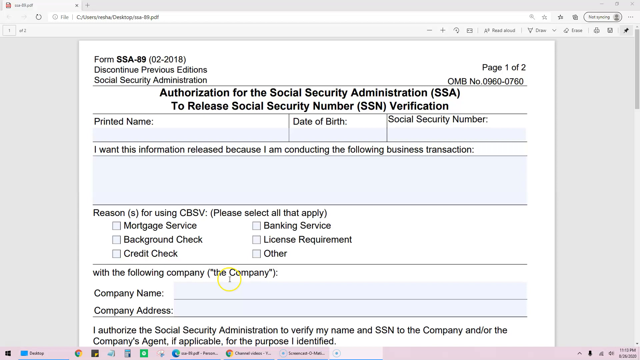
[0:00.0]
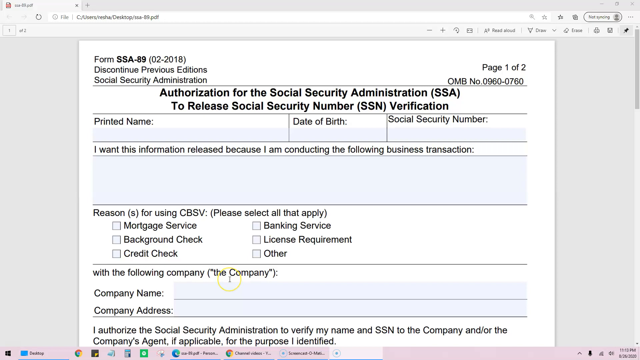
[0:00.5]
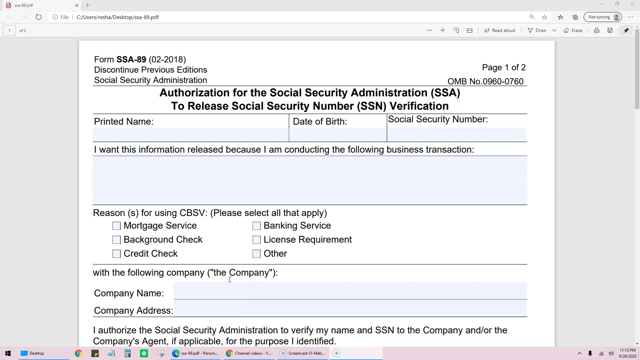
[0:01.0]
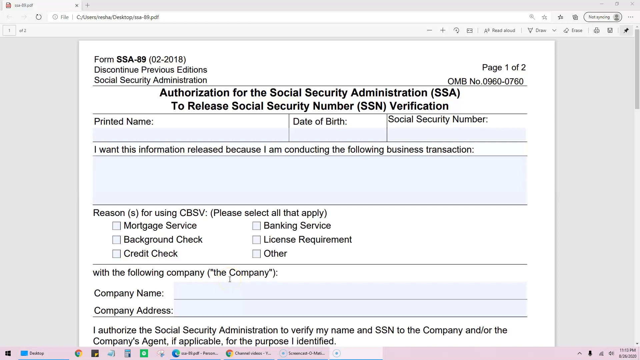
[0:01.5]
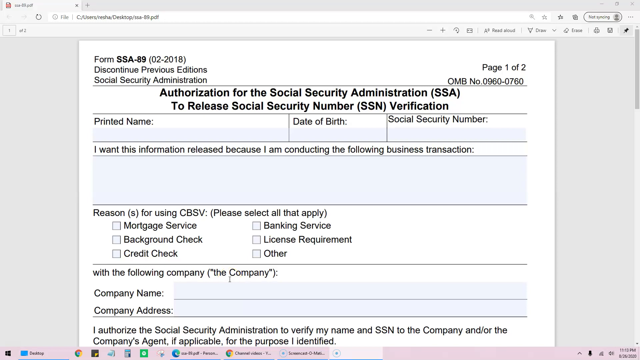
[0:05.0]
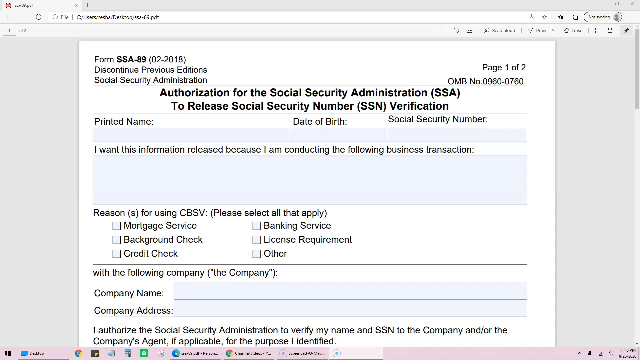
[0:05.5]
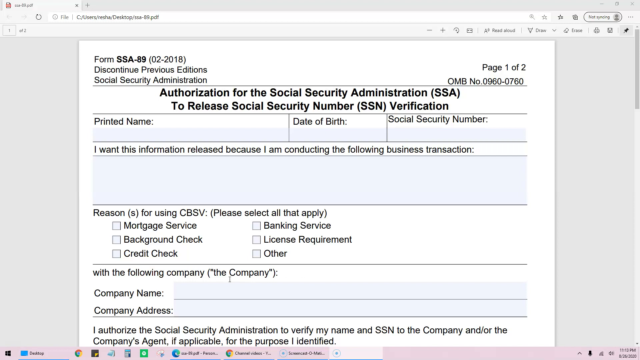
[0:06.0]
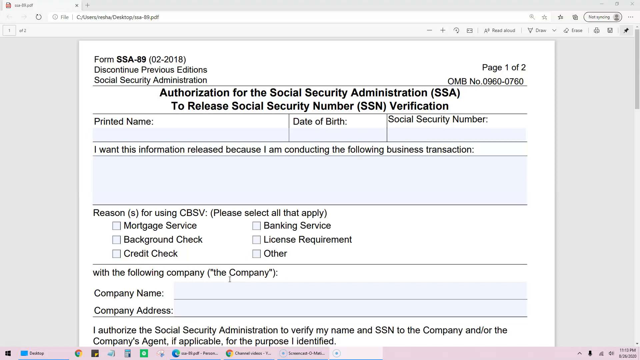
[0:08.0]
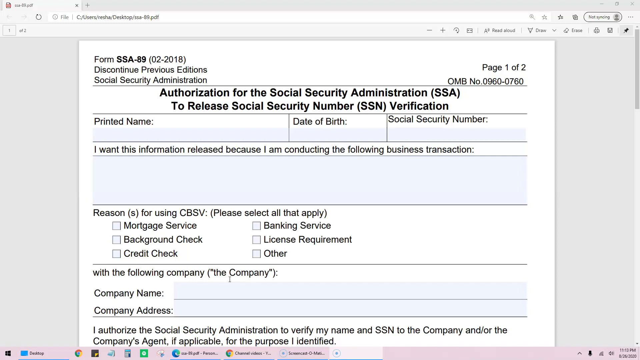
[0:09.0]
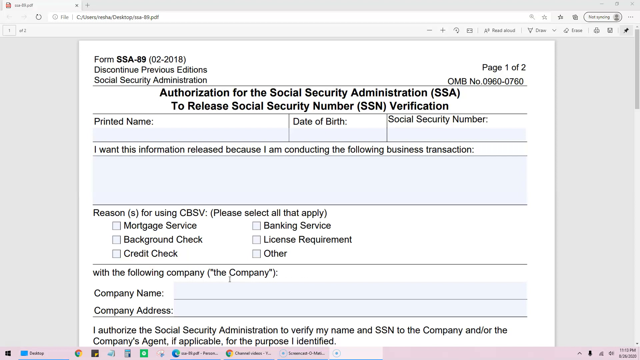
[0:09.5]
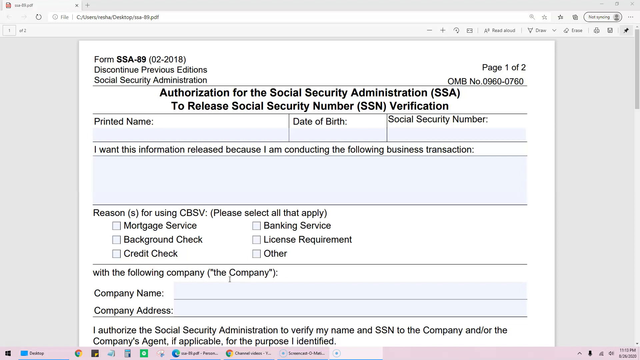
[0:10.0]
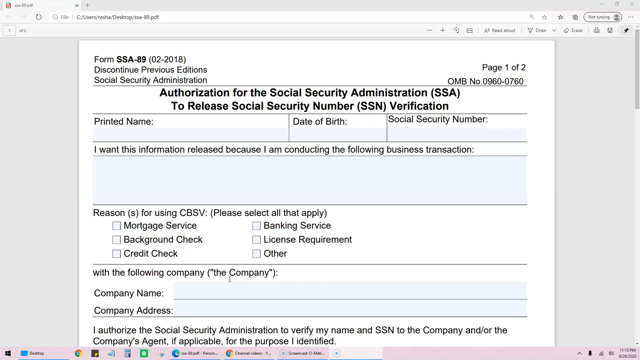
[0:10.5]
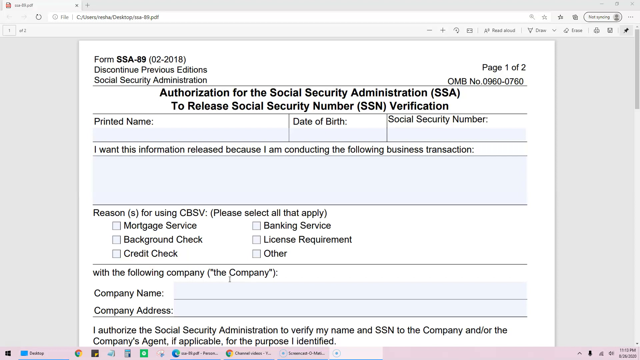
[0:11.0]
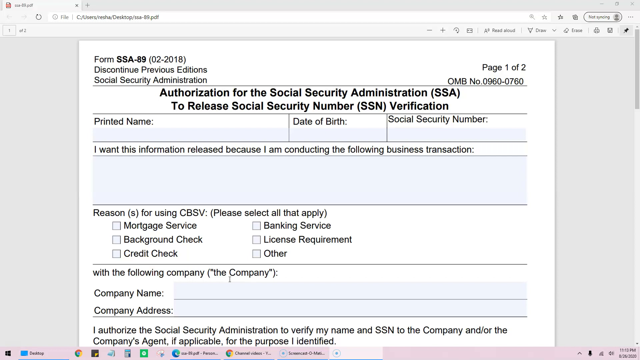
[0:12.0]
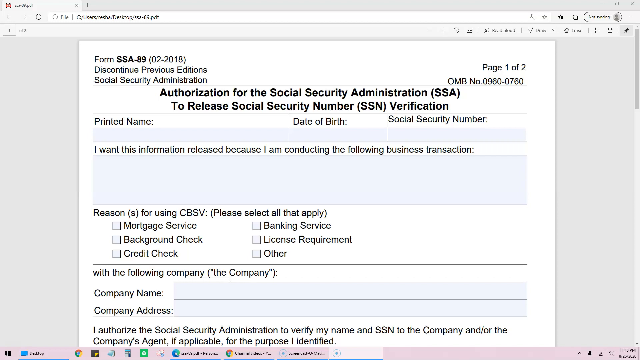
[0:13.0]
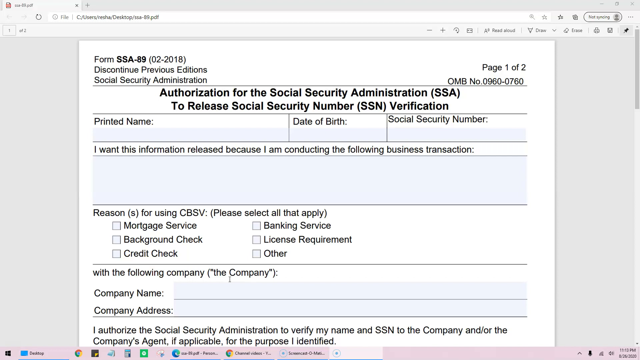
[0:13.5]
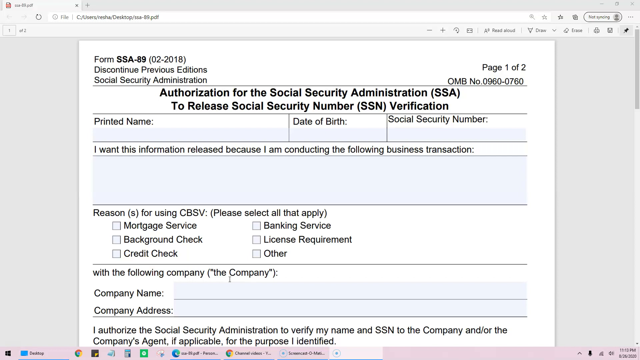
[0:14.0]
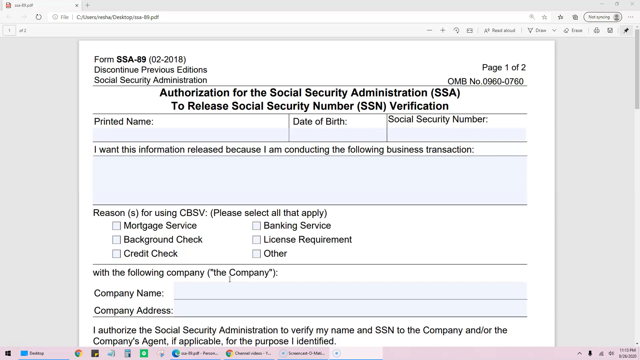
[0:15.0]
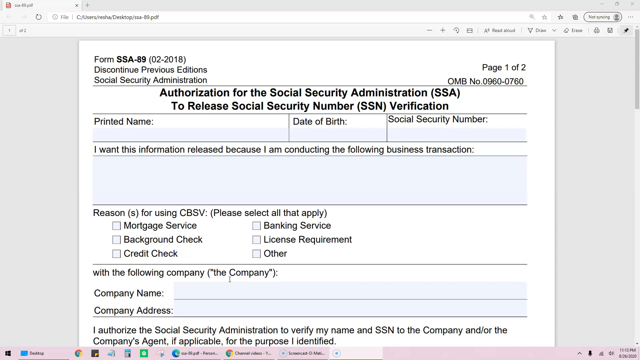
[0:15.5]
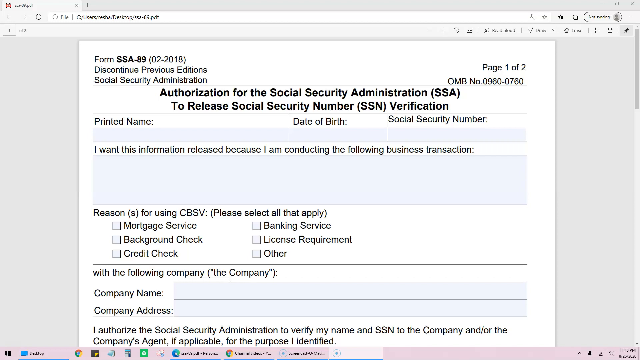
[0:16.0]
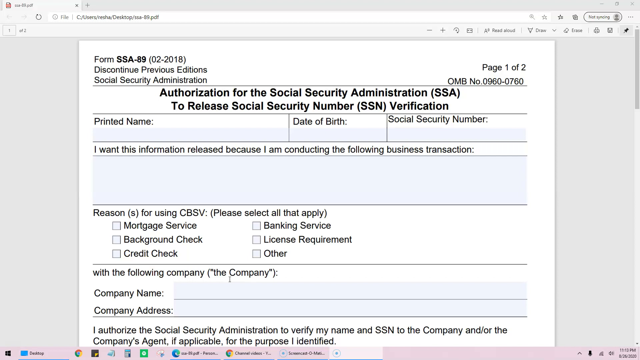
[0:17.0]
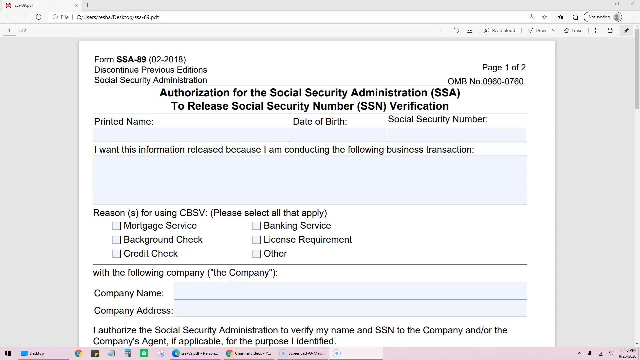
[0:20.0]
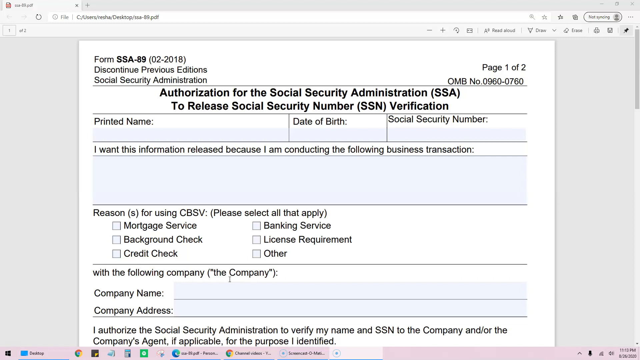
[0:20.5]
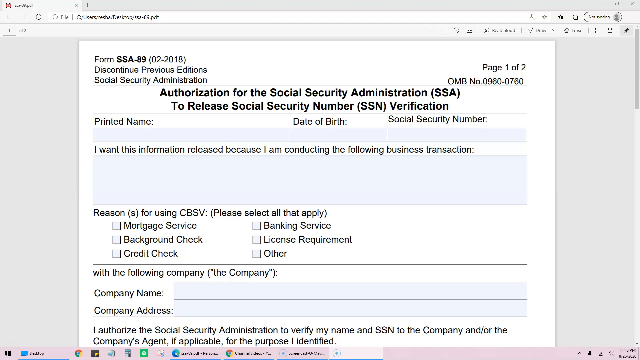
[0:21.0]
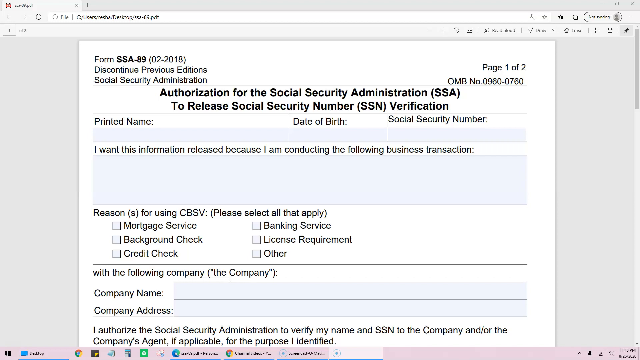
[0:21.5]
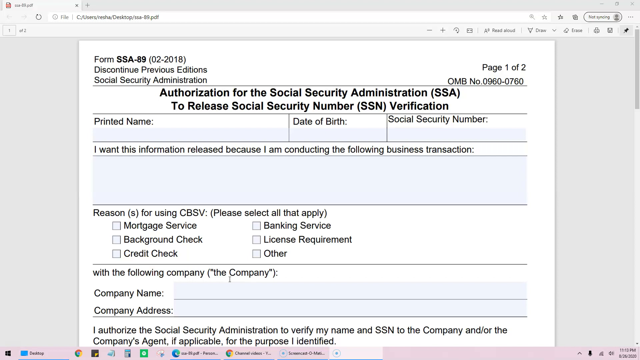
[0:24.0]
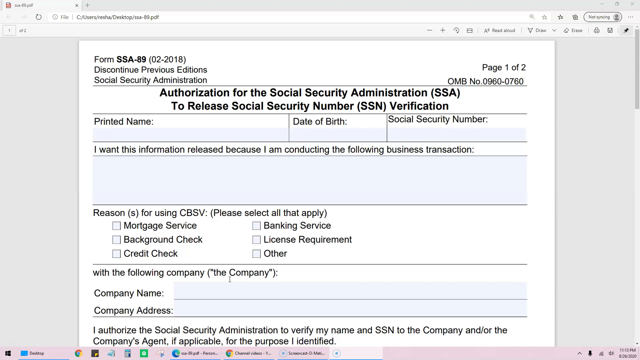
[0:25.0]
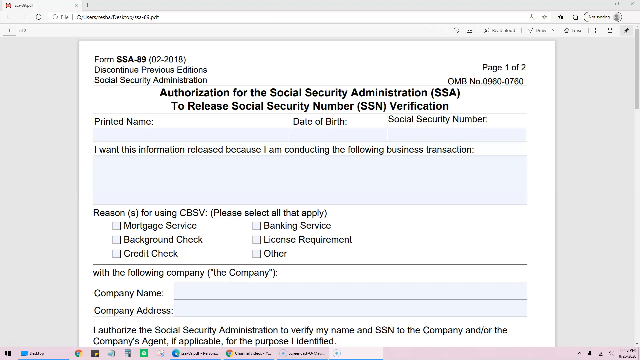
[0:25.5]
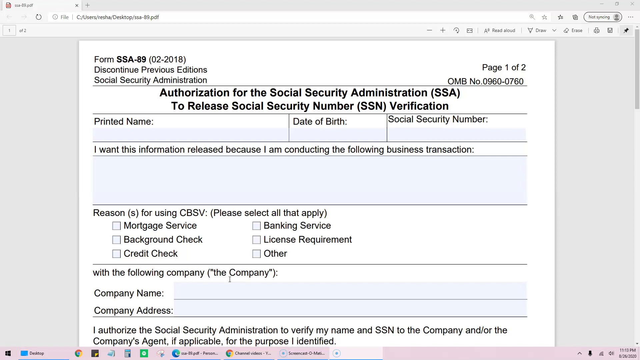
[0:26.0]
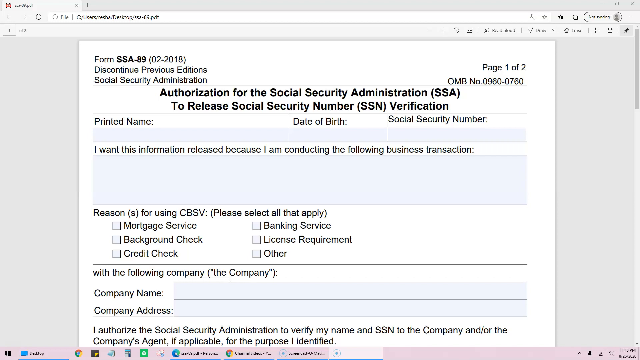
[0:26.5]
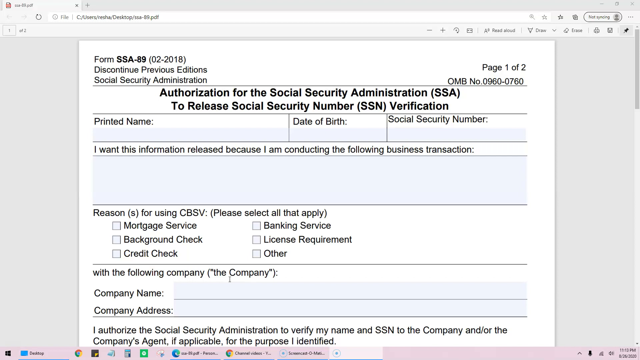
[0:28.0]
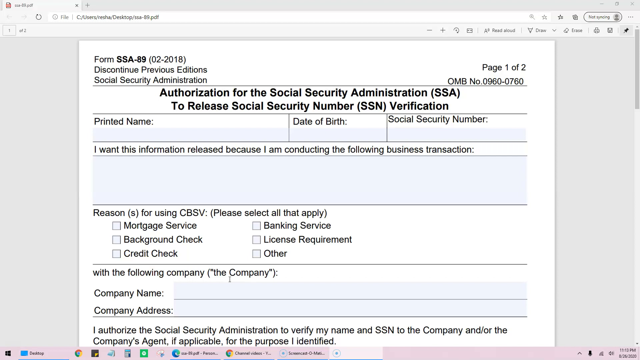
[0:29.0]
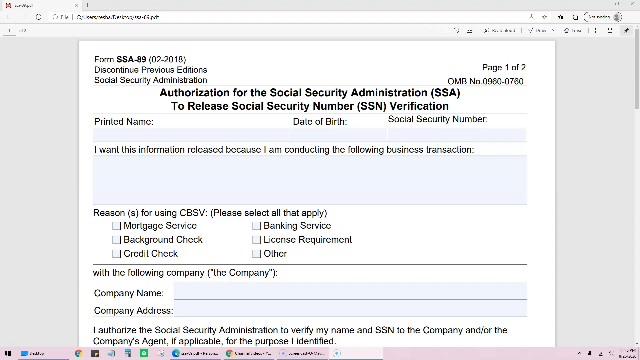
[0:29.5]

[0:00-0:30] A form, a piece of paper, is displayed: form SSA-89 from the Social Security Administration. The document is titled "Authorization for the Social Security Administration, SSA, to Release Social Security Number, SSN Verification." The form contains boxes to be filled out for name, date of birth, and social security number, plus a box for writing a note with extra information. It is a PDF file opened in a web browser, with one tab open in the upper left whose name ends with .pdf. The form is meant to be filled out by the person submitting it, and it is like a legal document.